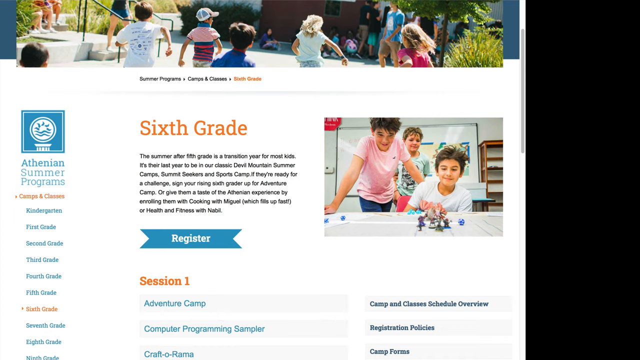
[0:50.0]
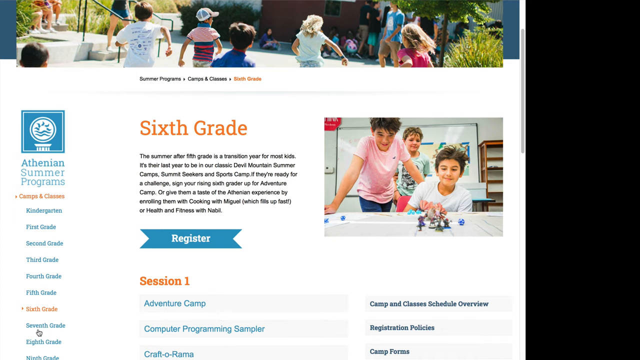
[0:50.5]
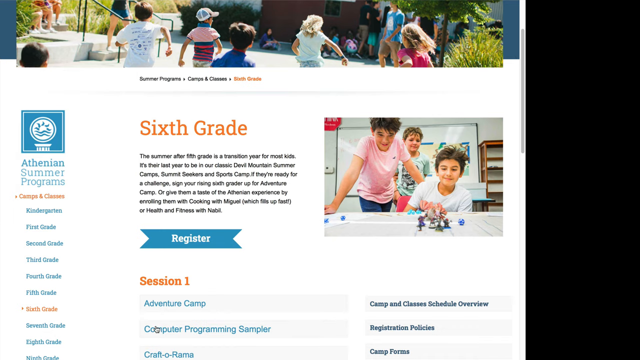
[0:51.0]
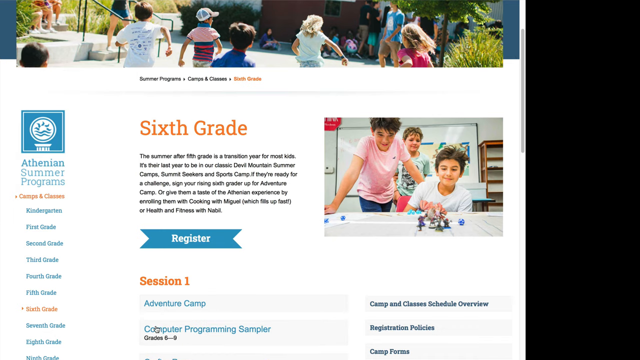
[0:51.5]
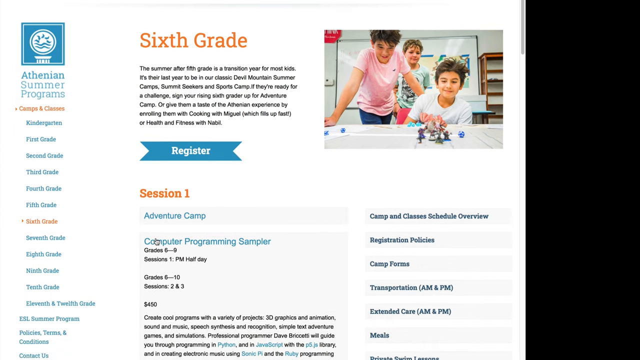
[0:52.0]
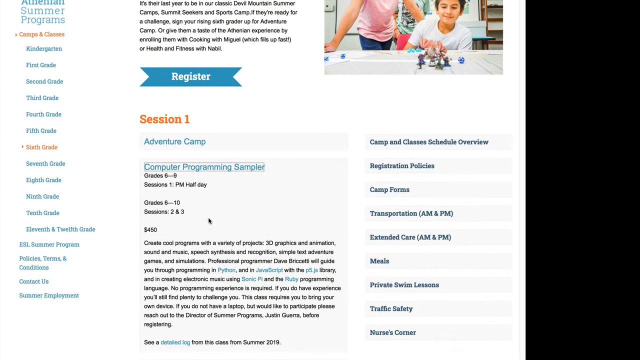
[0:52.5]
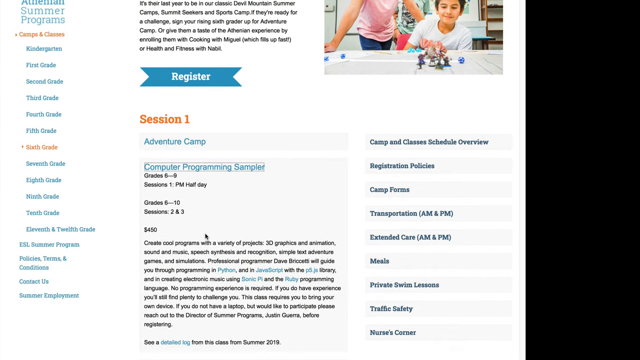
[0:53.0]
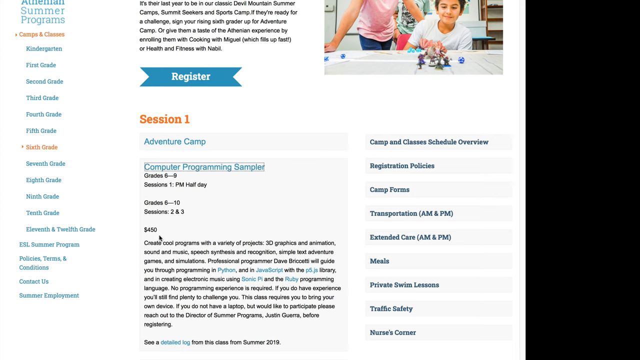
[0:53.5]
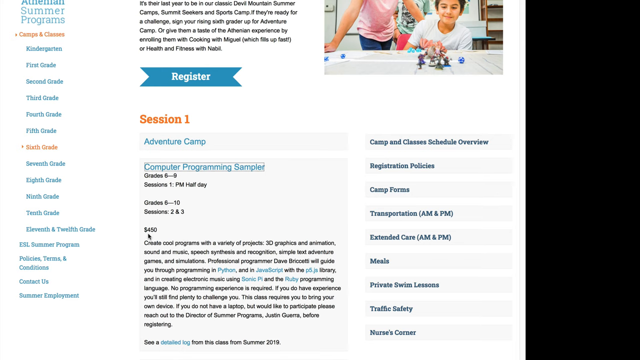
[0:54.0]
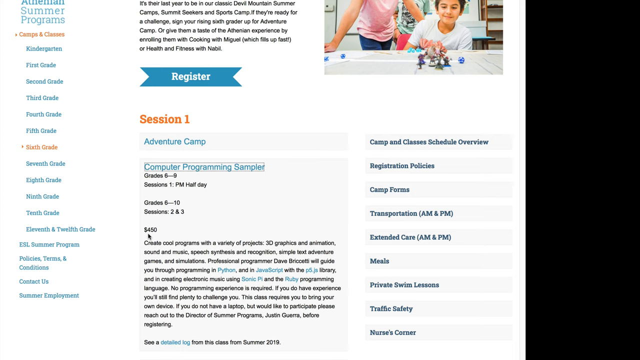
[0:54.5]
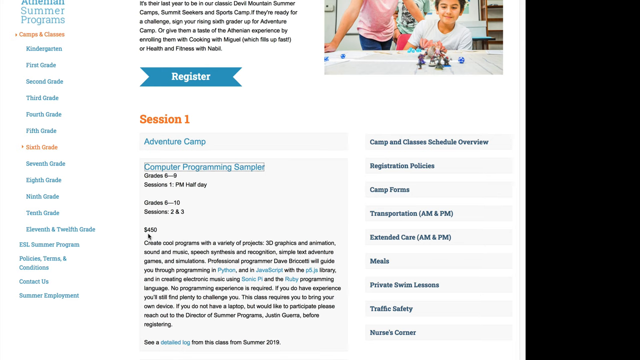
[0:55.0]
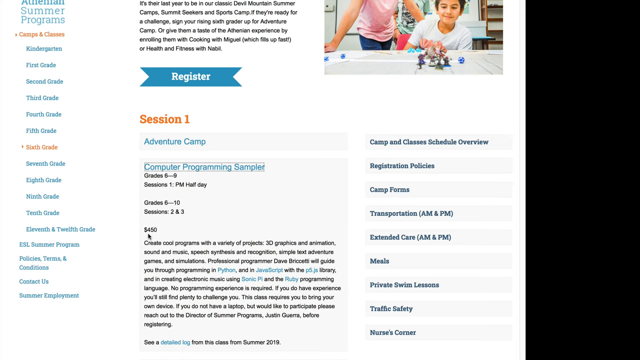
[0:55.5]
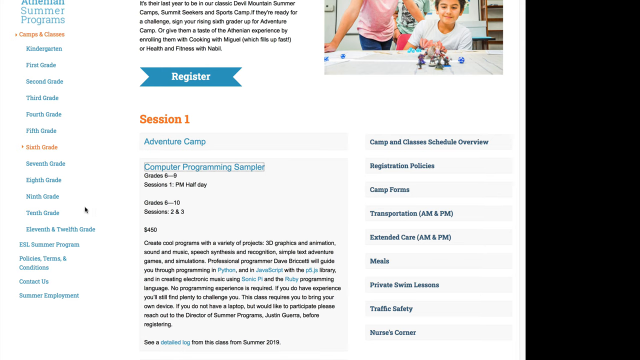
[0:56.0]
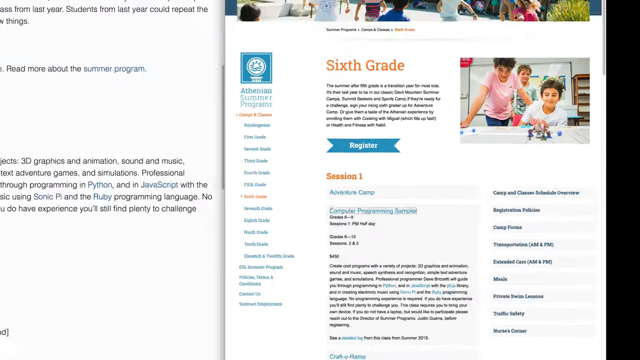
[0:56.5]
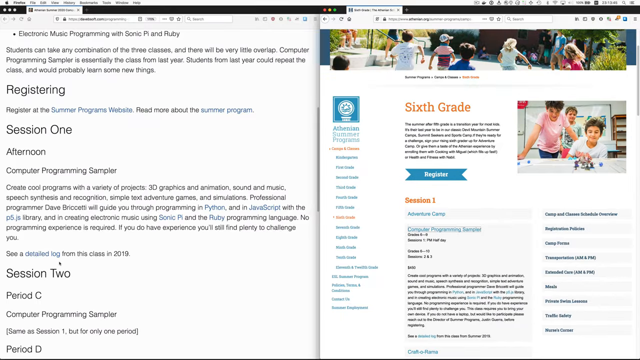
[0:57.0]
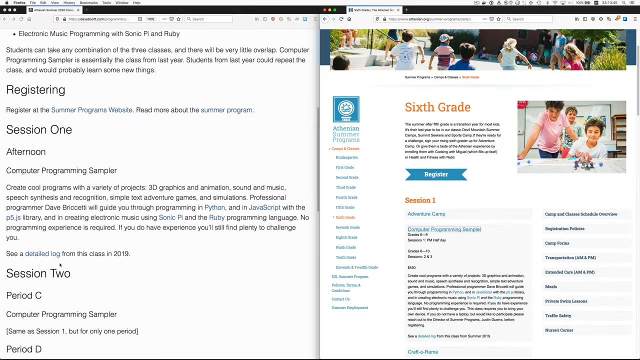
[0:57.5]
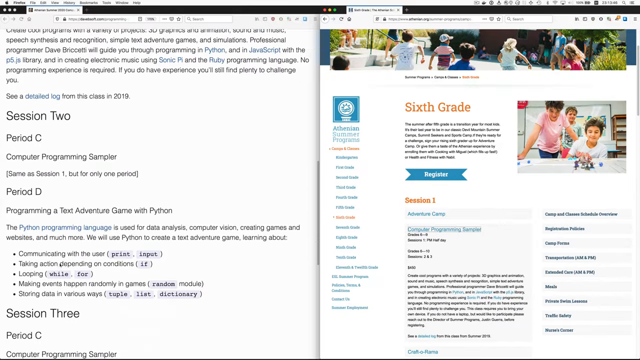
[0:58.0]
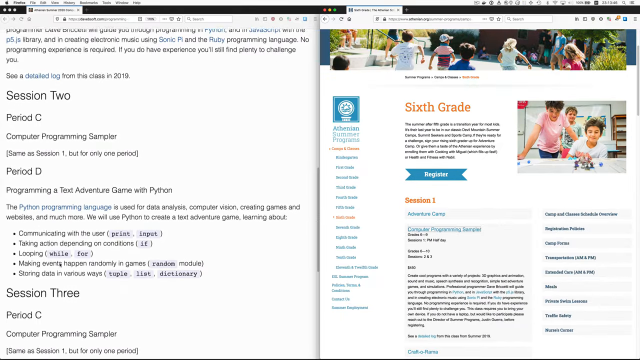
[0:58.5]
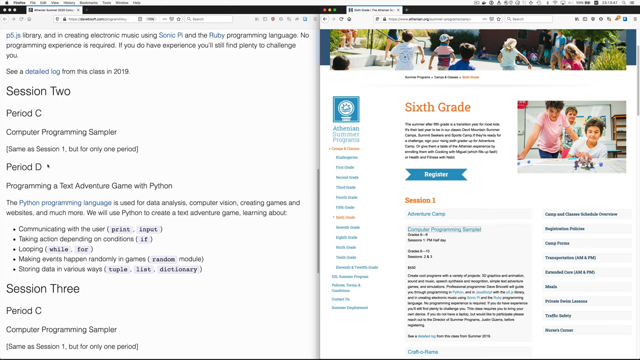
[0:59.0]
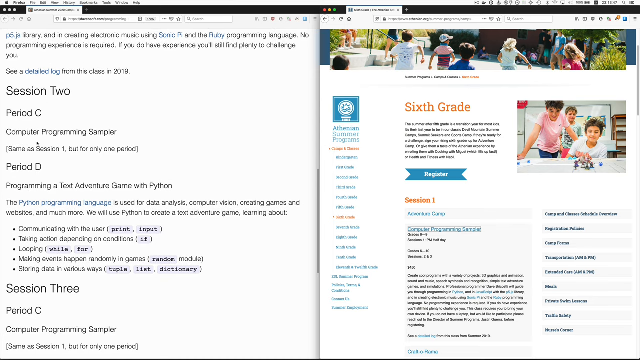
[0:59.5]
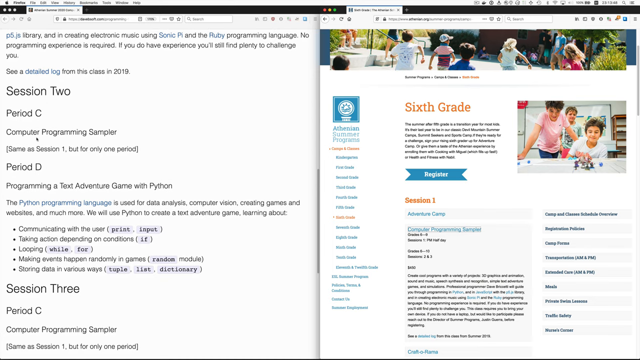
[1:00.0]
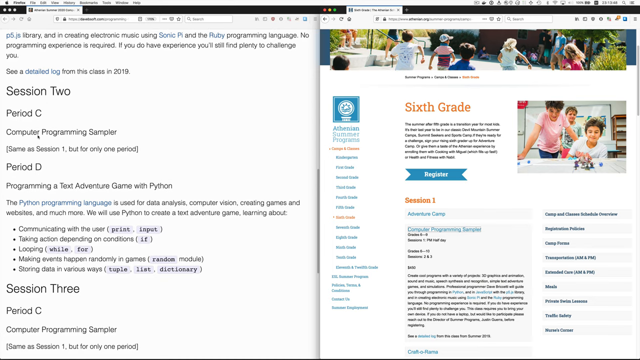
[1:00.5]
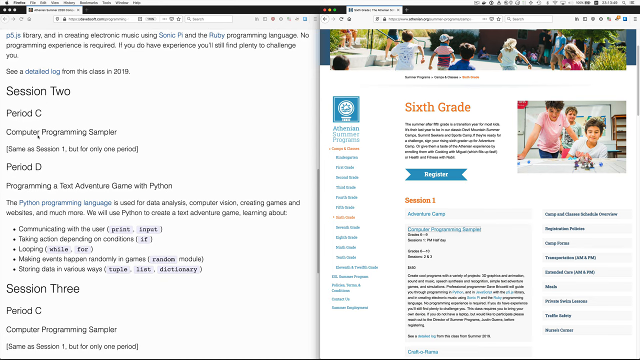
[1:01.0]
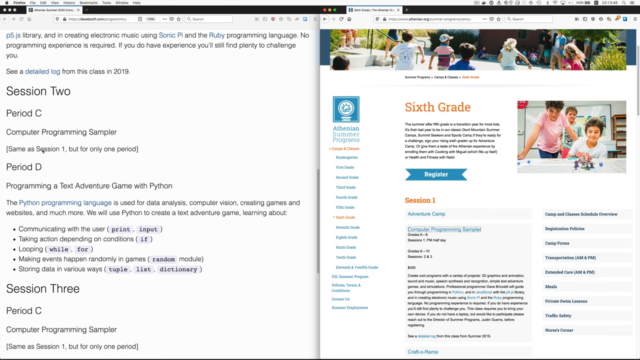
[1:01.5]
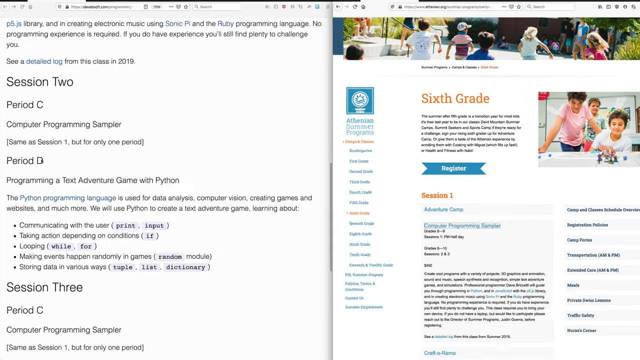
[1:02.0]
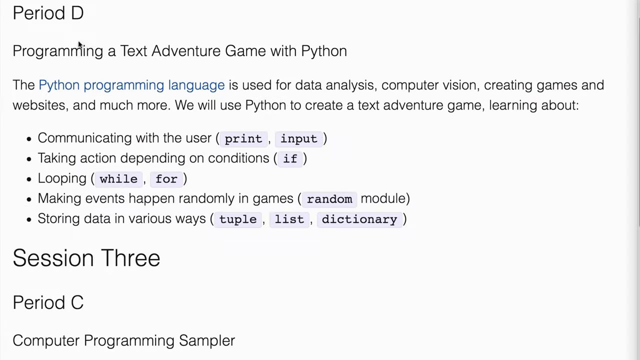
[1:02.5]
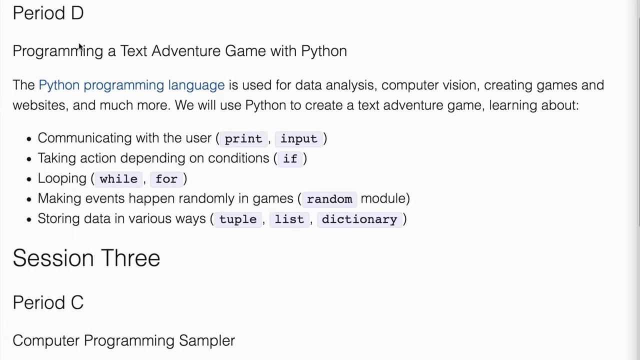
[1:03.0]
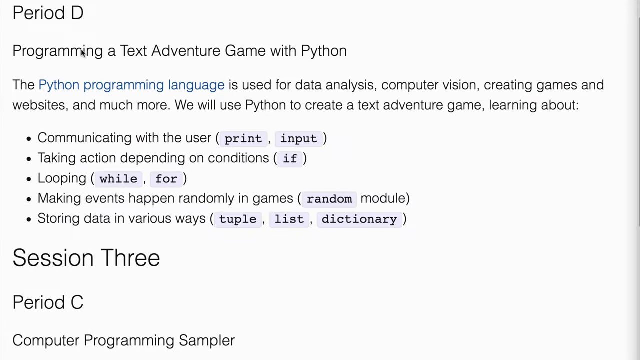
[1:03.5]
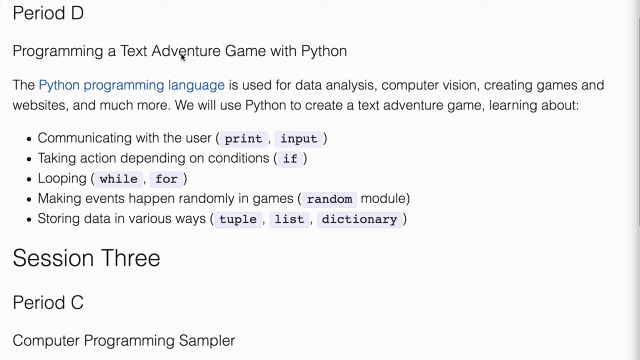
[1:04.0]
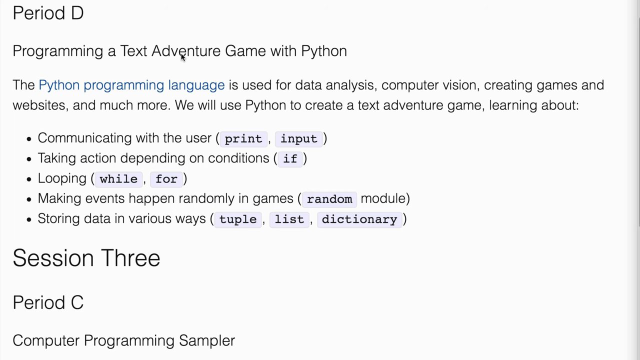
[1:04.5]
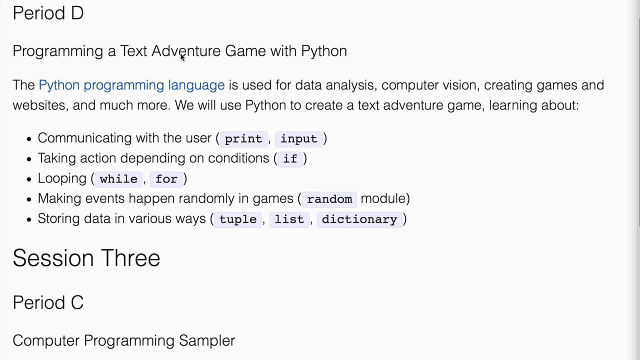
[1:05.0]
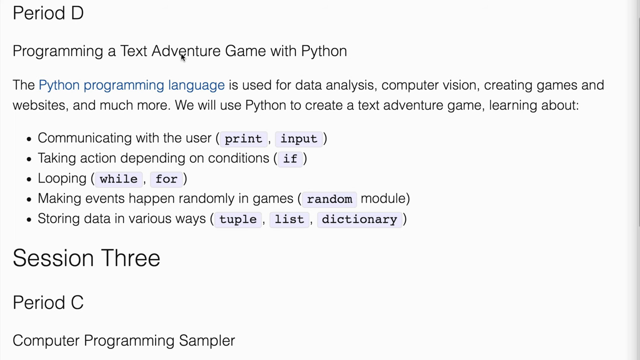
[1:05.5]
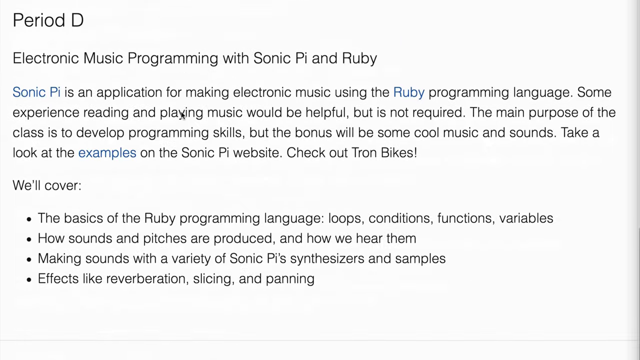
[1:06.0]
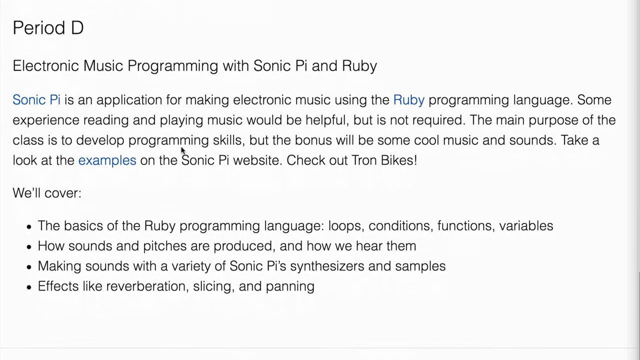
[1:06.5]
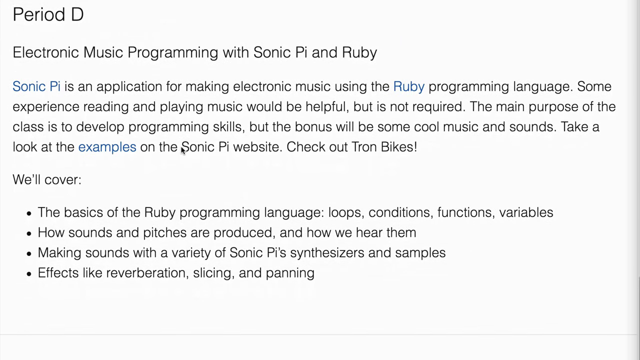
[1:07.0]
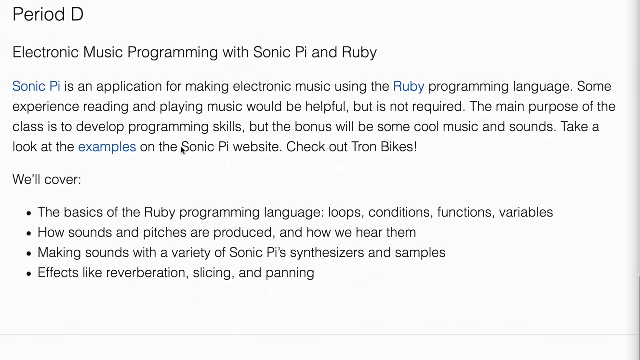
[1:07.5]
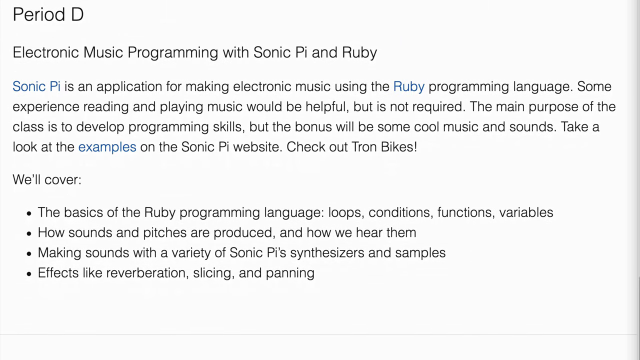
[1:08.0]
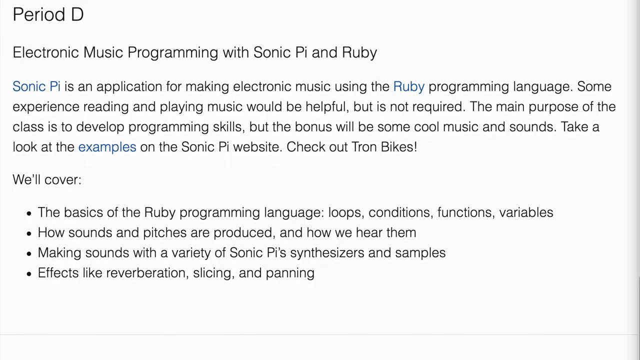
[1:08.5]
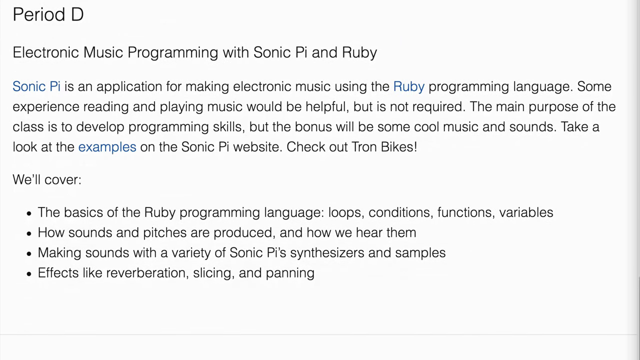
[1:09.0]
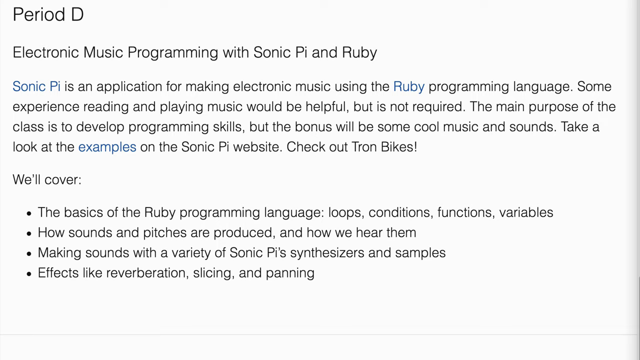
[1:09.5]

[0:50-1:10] A page from the Athenian Summer Programme website has the words "sixth grade" in orange. Underneath is some information about this class or camp, and a blue ribbon-shaped tab with the word "register" in white, so it appears that visitors can register for this class or camp. The view then goes back to more information on the left side about session 2: period C is "computer programming sampler" and period D is "programming a text adventure game with Python", with a lot of information about the programming classes offered at the camp. There is a close-up of session 3, period C, and then the view moves down the page to period D, music programming. The video then goes back to the 6th grade information page shown earlier.